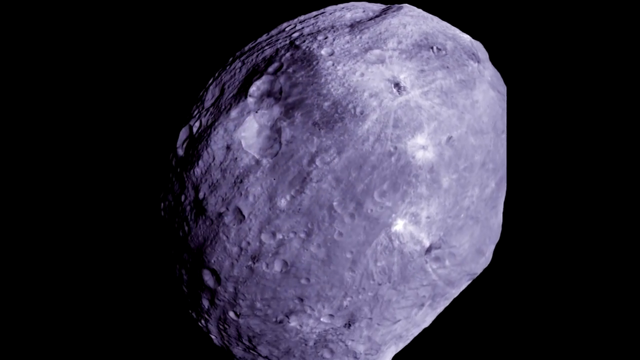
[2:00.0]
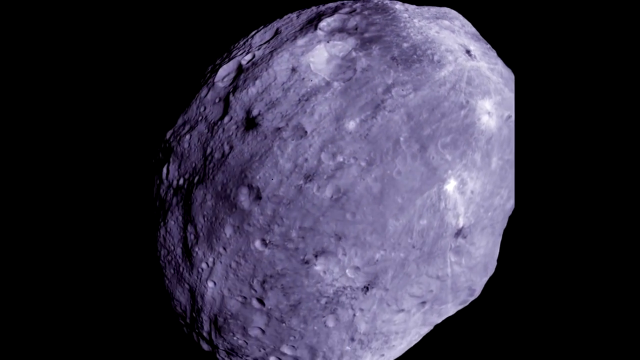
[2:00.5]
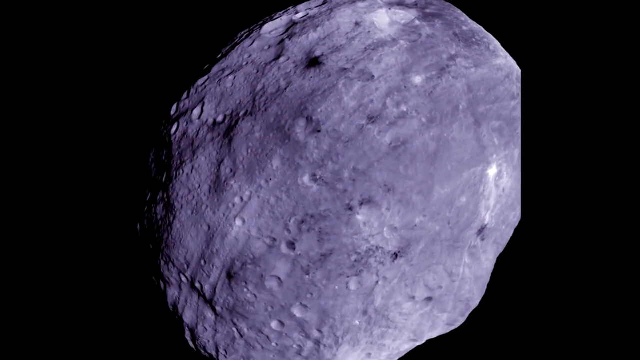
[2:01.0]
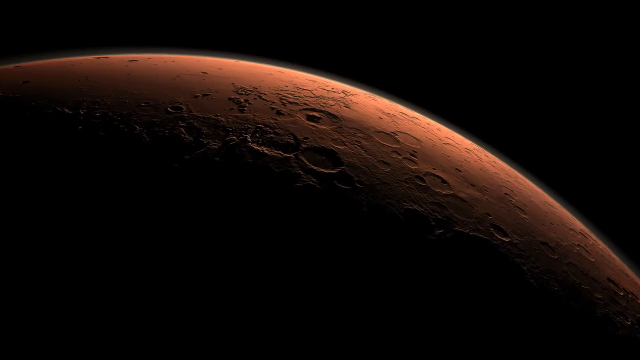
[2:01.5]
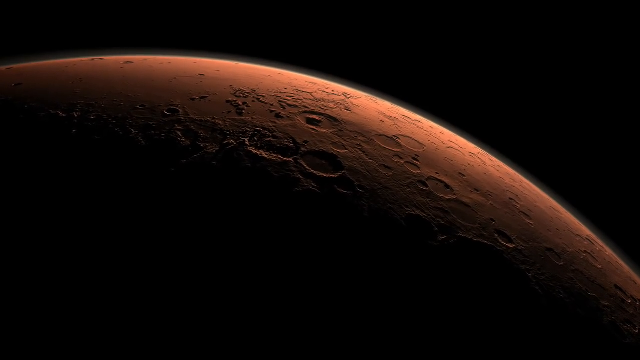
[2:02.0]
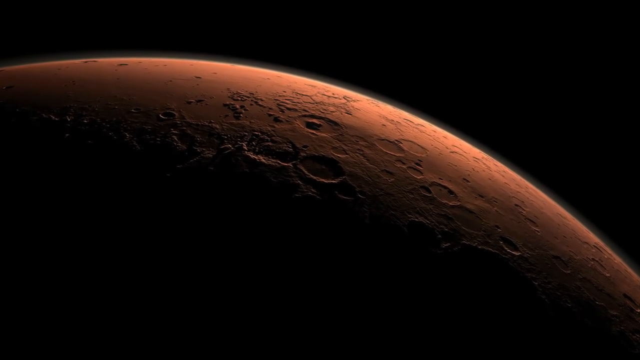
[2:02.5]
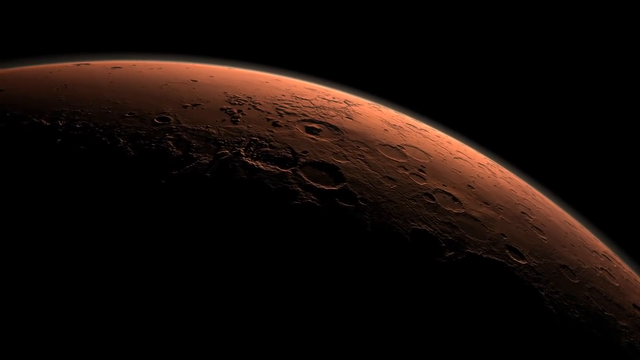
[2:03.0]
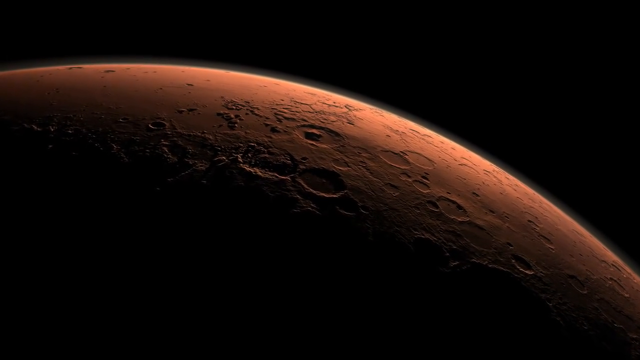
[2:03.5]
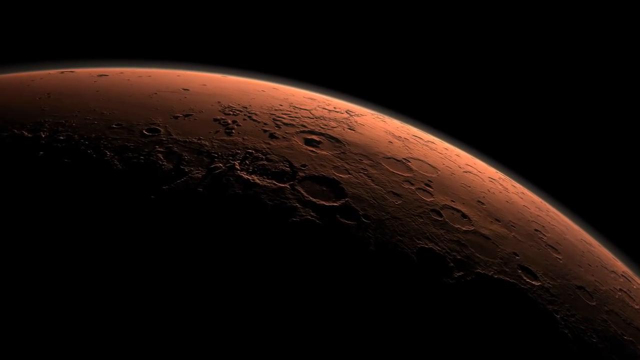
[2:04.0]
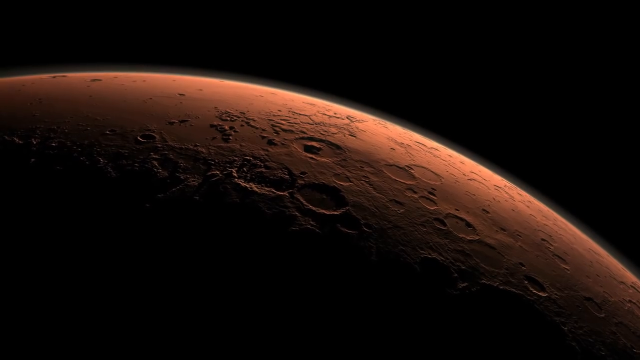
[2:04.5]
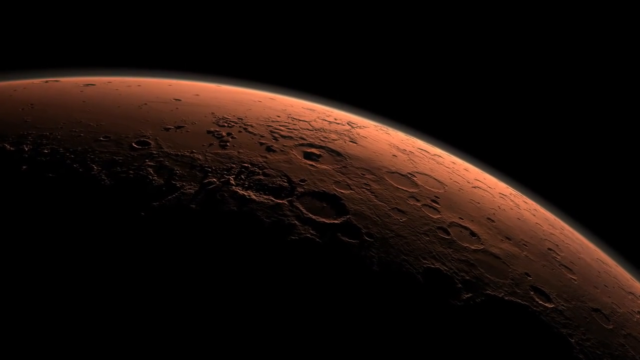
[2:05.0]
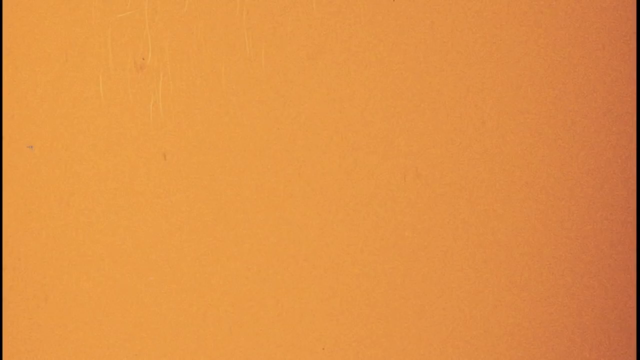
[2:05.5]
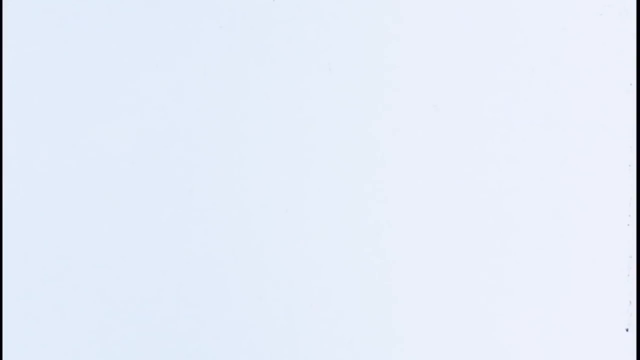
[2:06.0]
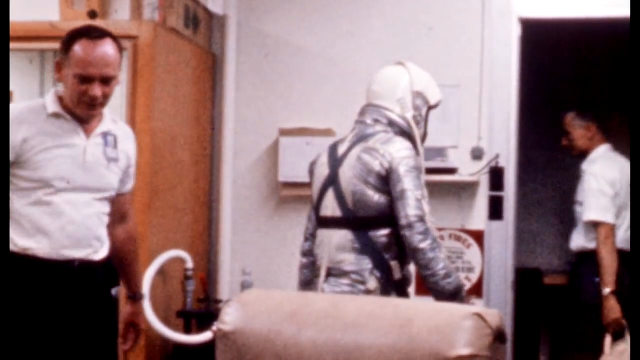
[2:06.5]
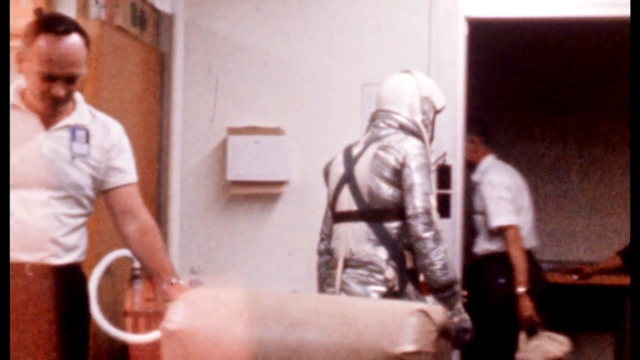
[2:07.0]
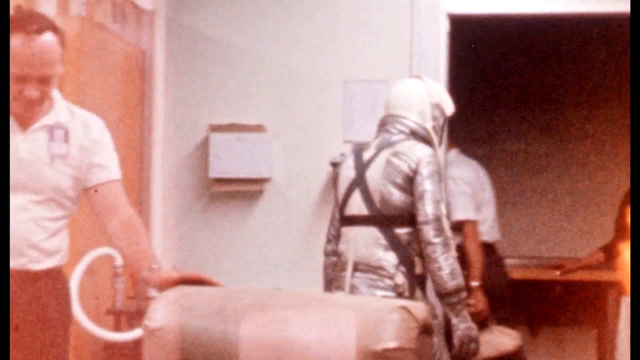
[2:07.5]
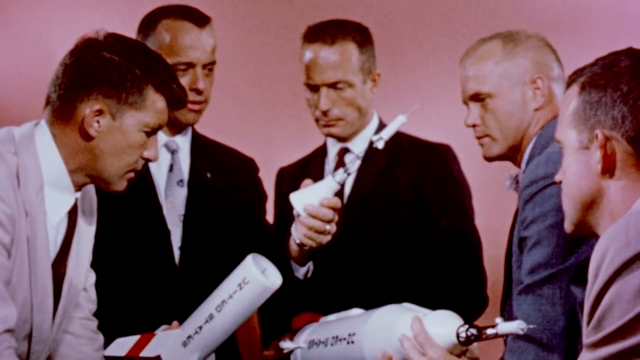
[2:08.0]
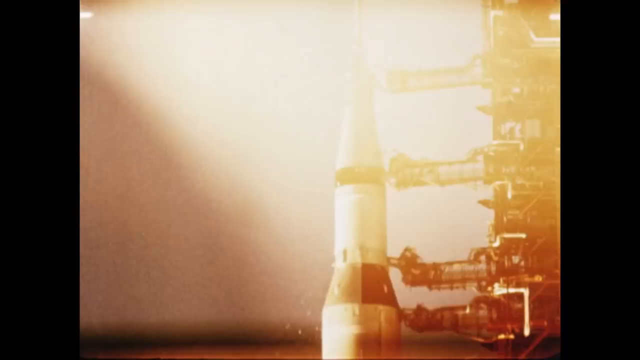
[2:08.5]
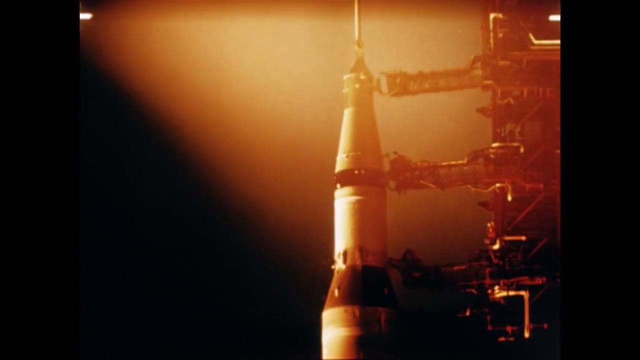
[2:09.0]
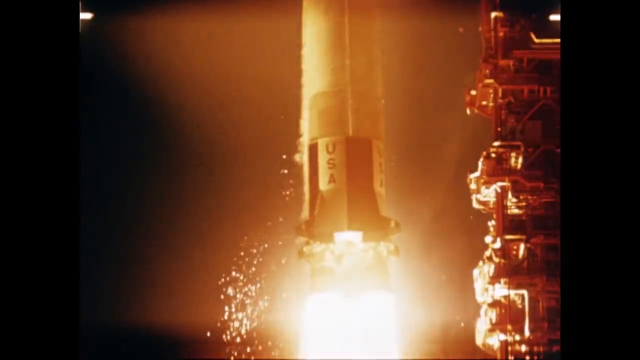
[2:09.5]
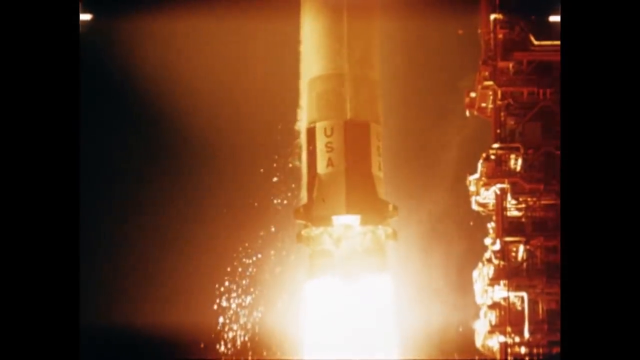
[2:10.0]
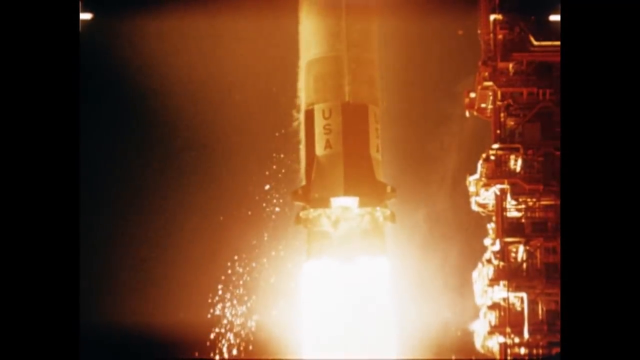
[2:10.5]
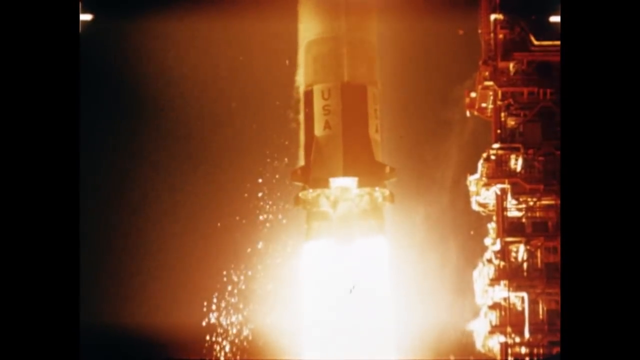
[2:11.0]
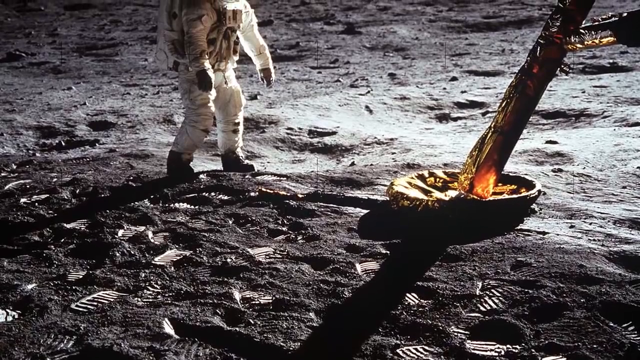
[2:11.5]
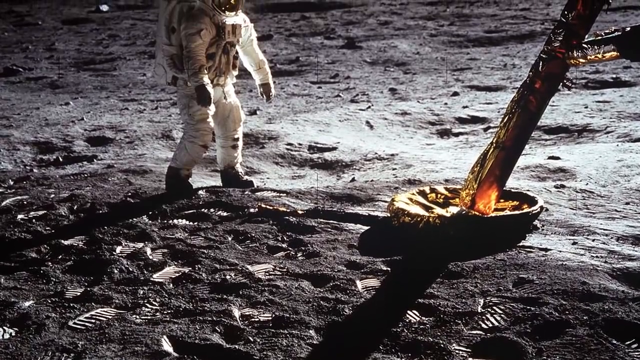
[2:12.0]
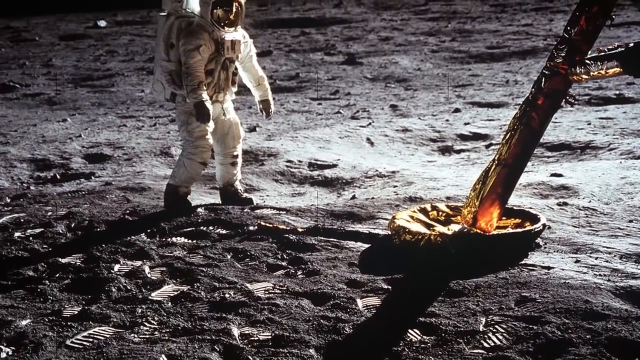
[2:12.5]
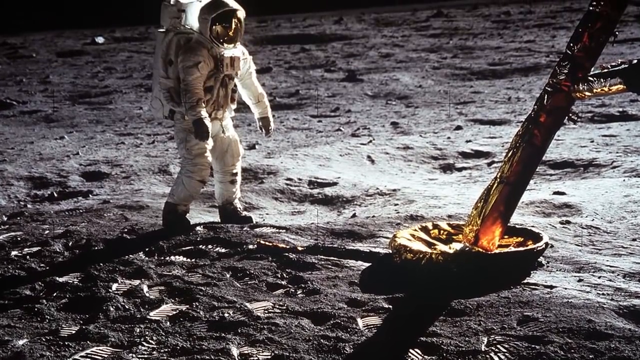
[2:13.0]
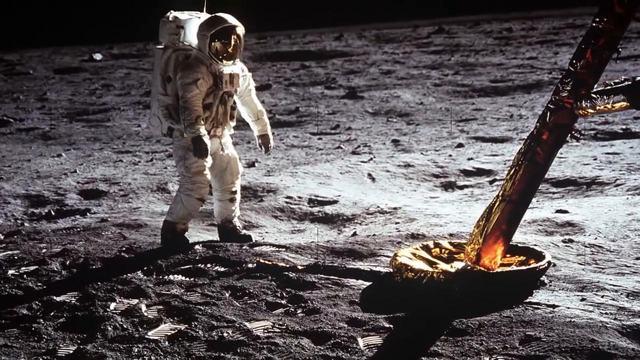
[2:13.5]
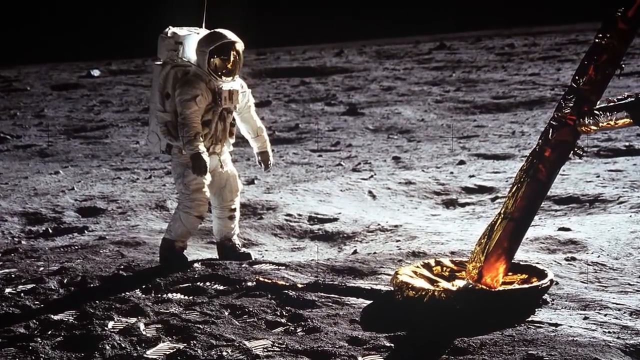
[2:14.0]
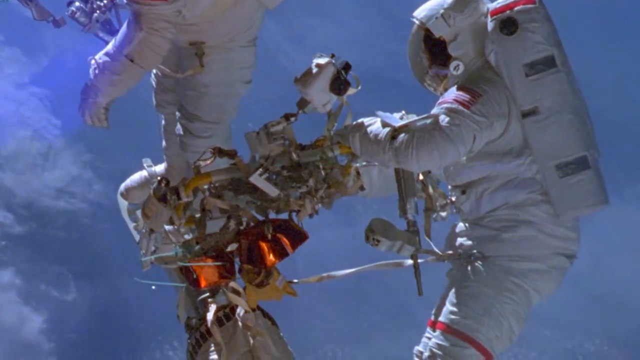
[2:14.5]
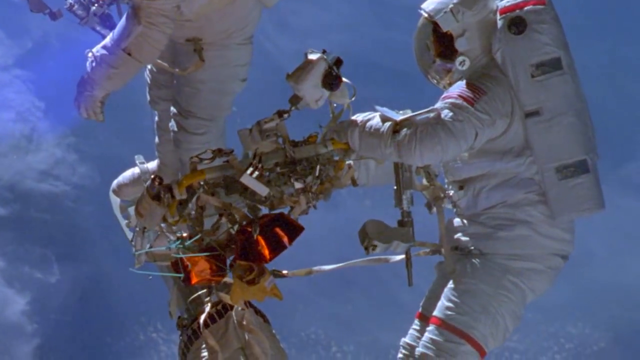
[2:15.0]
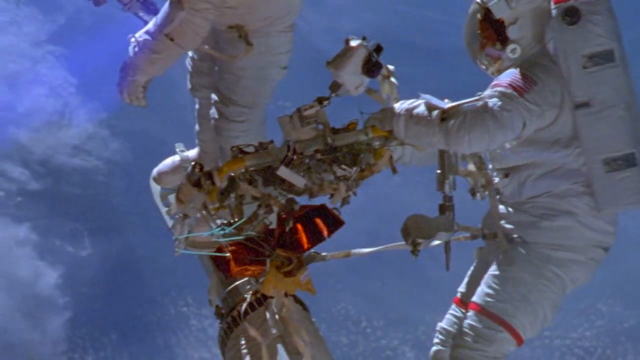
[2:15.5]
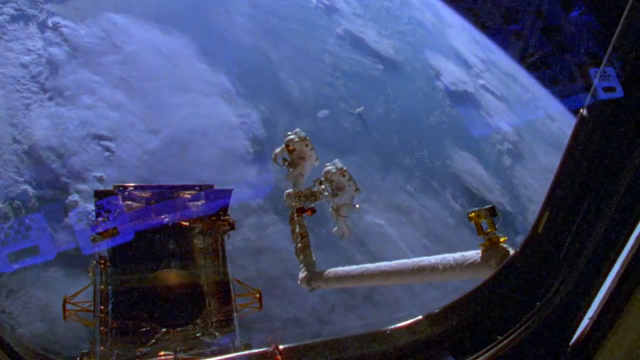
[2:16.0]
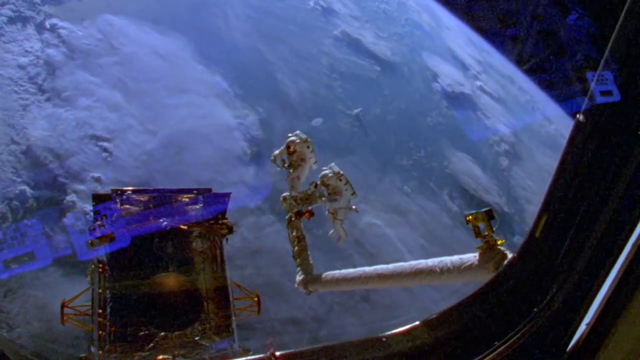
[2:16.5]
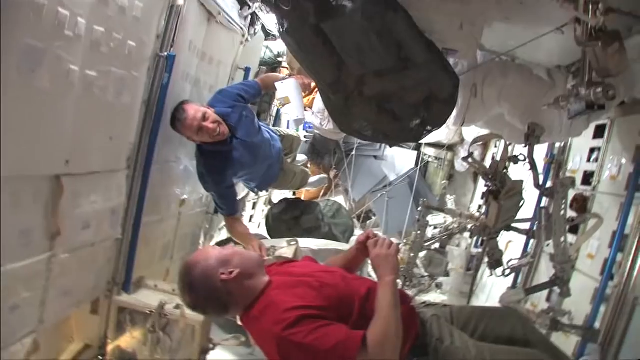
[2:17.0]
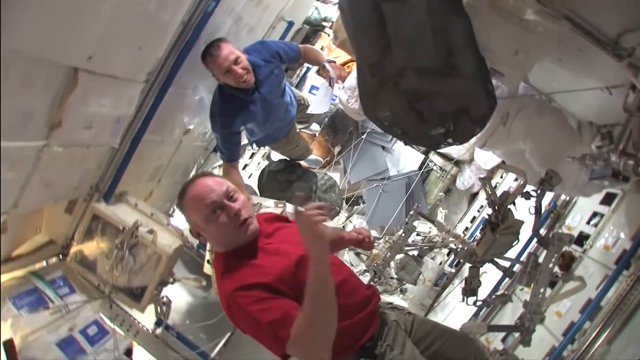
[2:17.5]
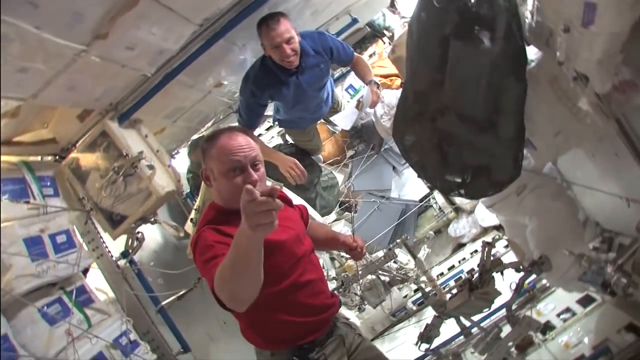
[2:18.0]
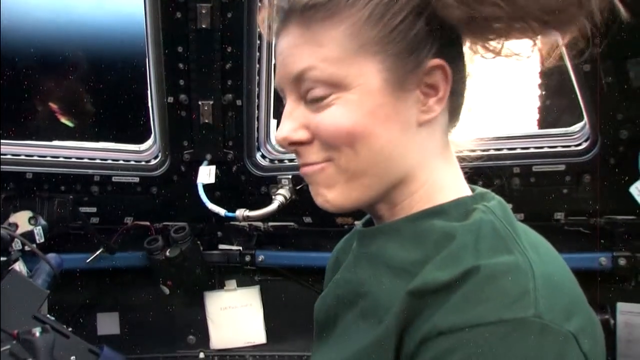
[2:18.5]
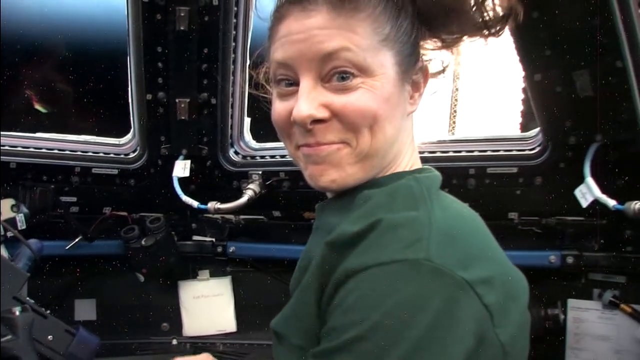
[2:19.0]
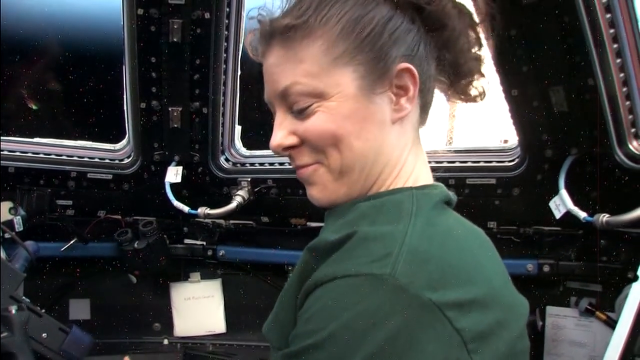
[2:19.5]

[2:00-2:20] A spinning rock appears, possibly the moon. Another surface follows that looks crater-like, like the moon, but with an orange tint, and then another rock that goes up. Images show an astronaut on a gray, bumpy surface that looks like the moon, in full protective gear including what appears to be a backpack, apparently holding air to breathe. Two astronauts float in space with cords holding them there. Then some astronauts are shown with their hair floating in the air.